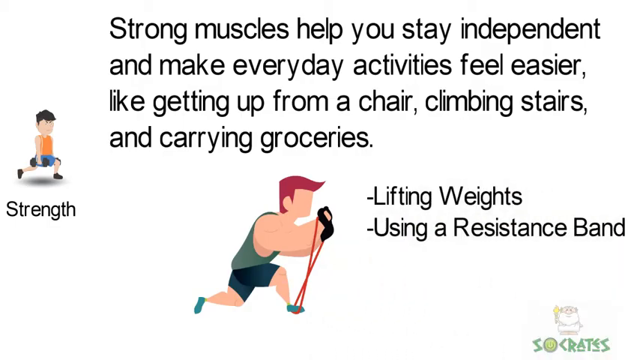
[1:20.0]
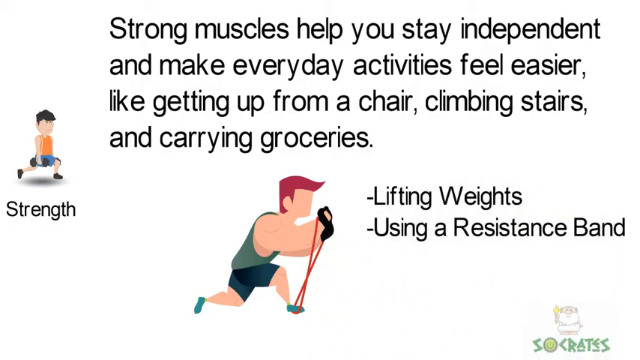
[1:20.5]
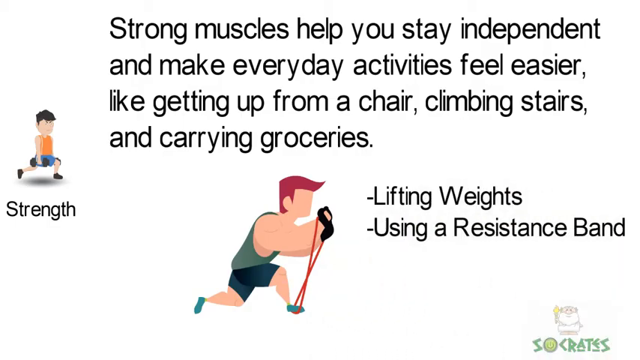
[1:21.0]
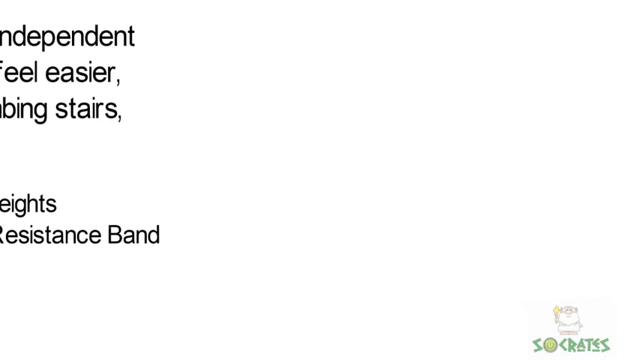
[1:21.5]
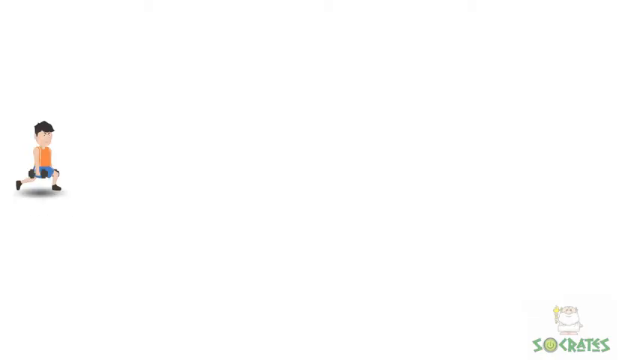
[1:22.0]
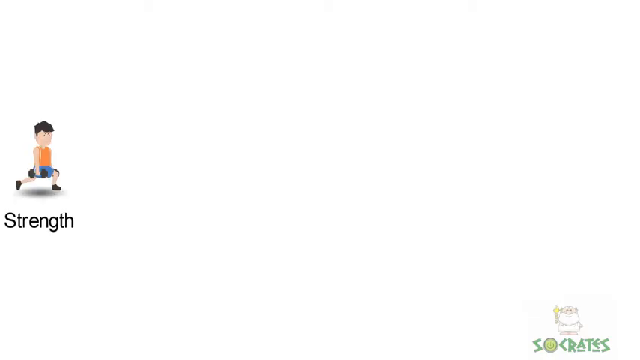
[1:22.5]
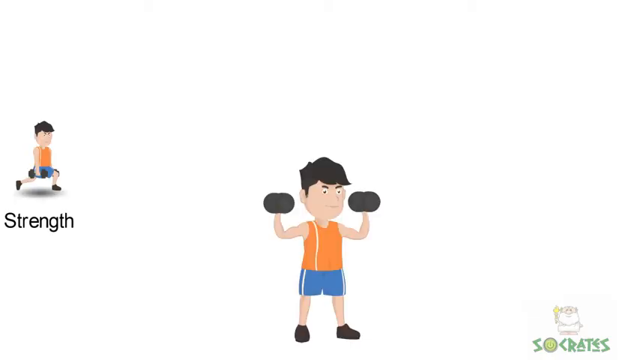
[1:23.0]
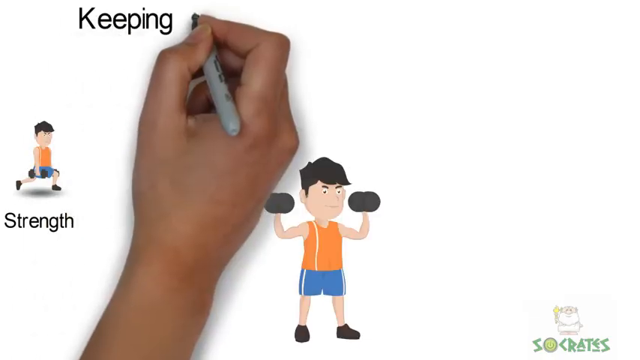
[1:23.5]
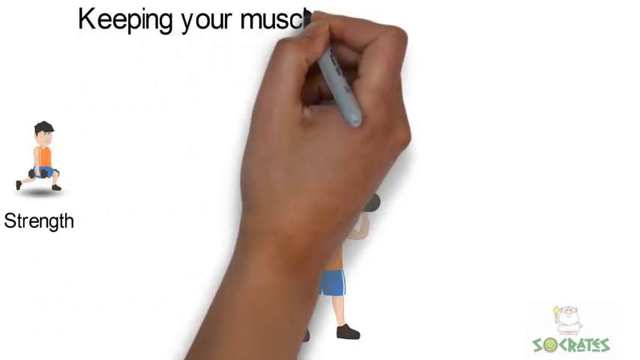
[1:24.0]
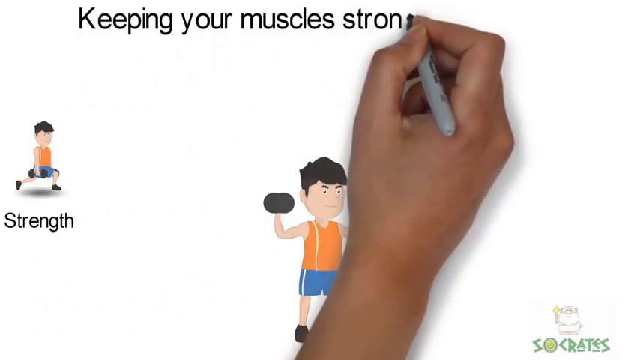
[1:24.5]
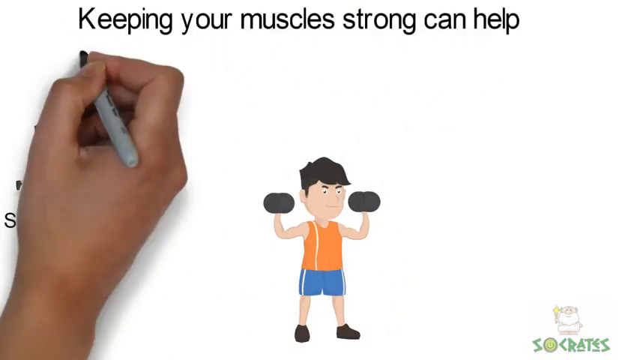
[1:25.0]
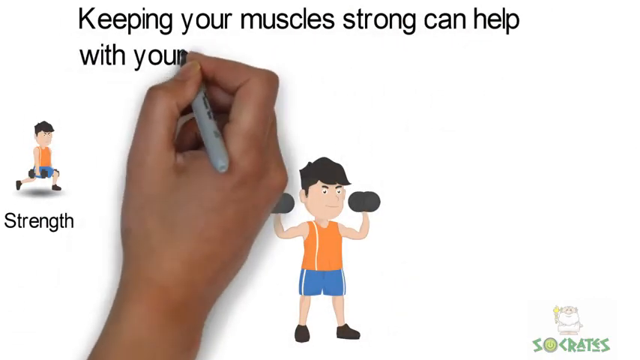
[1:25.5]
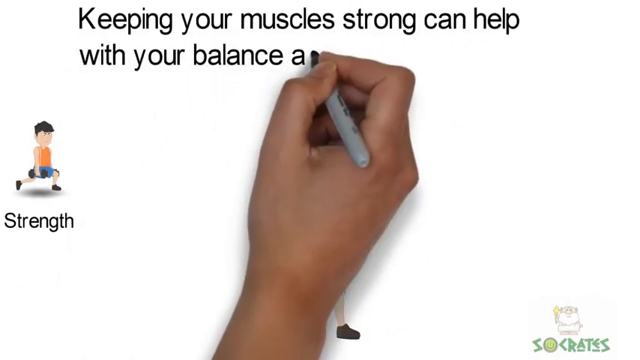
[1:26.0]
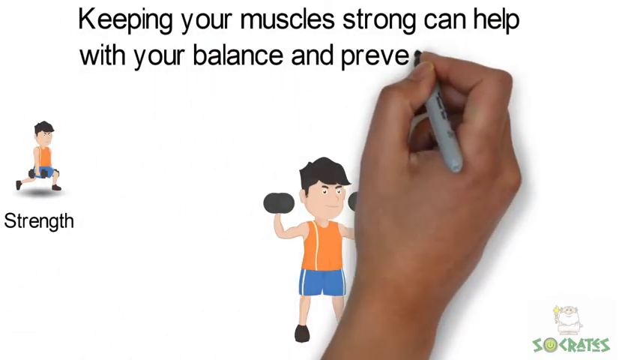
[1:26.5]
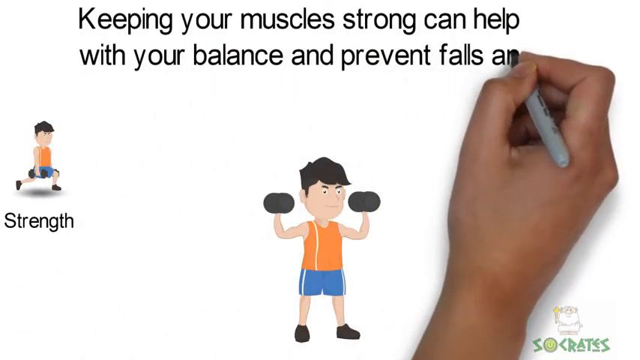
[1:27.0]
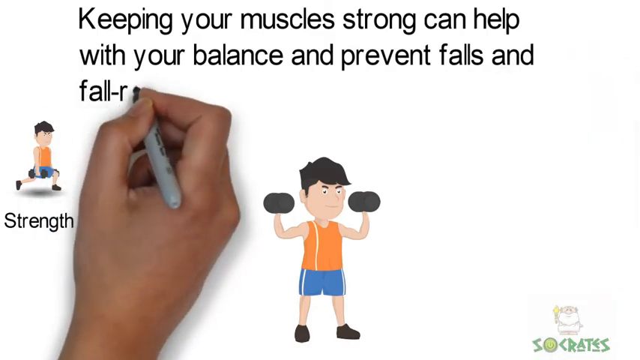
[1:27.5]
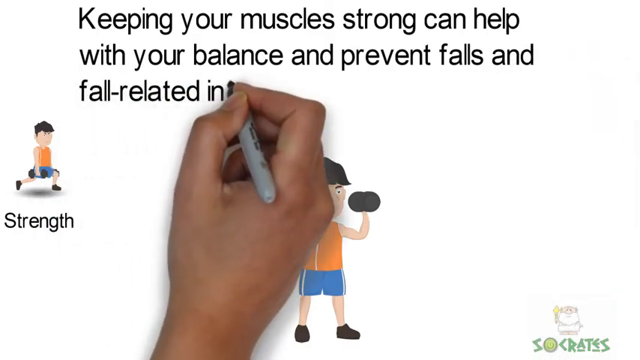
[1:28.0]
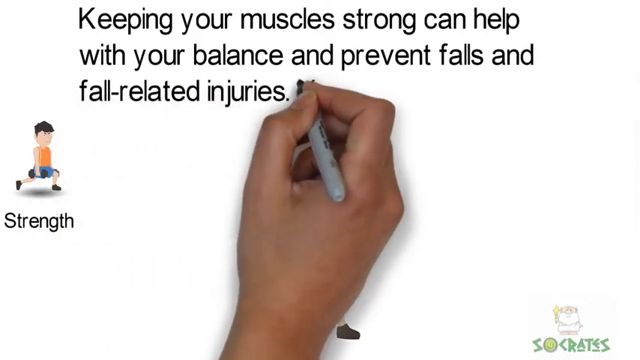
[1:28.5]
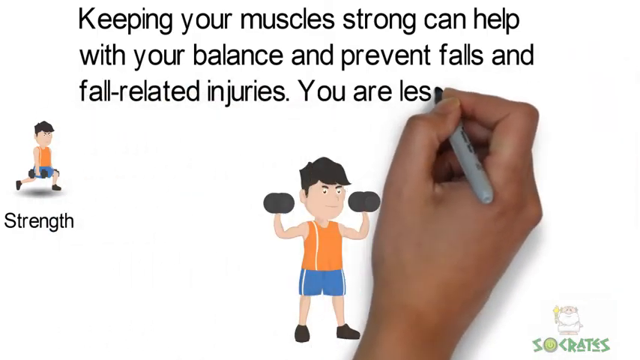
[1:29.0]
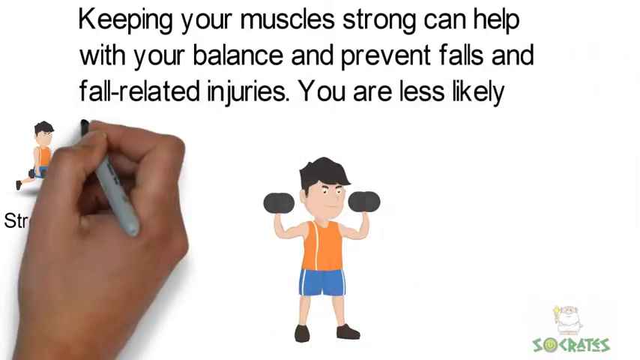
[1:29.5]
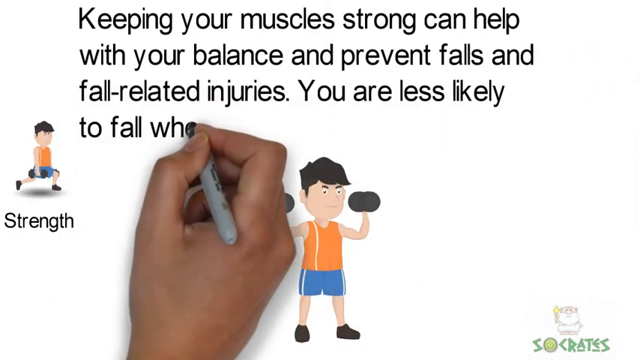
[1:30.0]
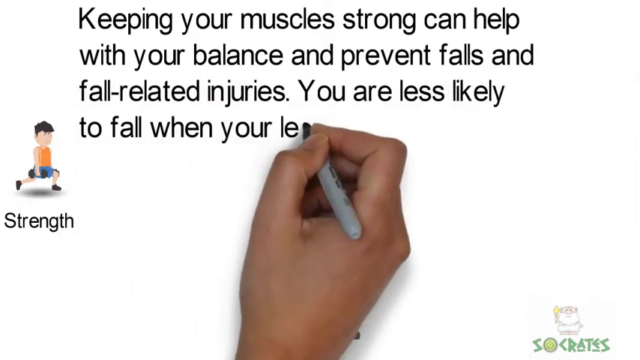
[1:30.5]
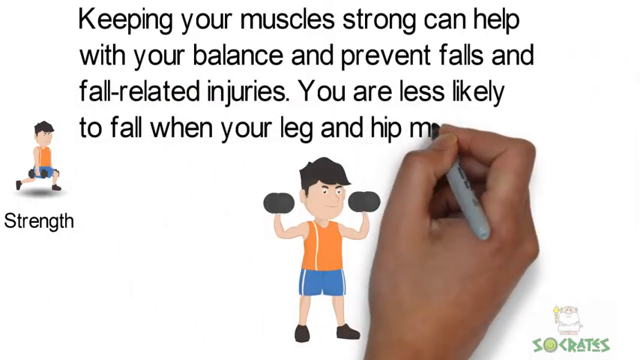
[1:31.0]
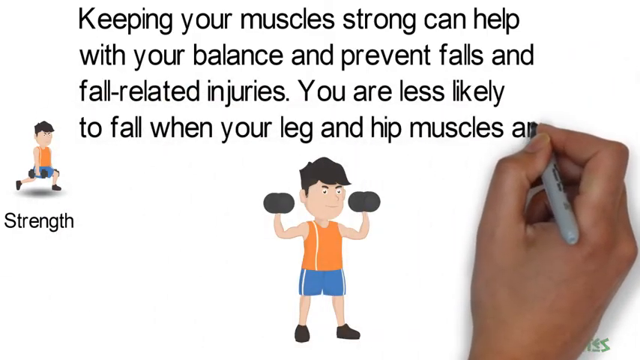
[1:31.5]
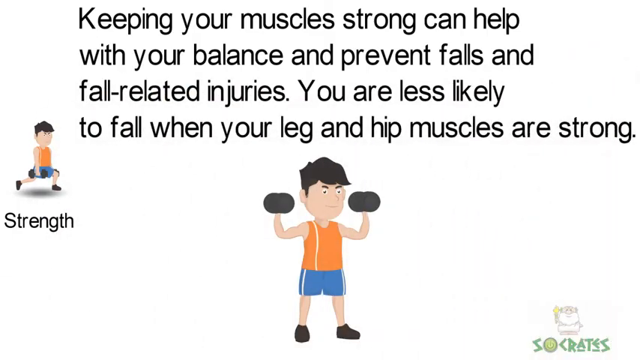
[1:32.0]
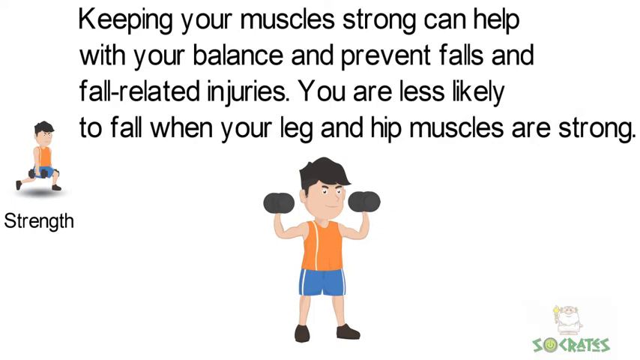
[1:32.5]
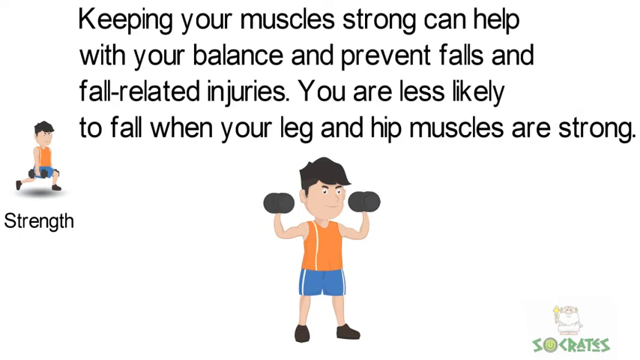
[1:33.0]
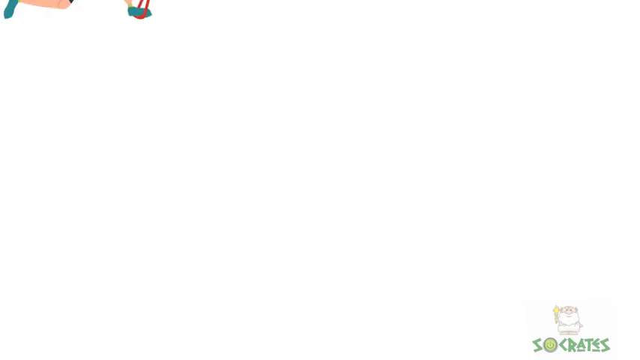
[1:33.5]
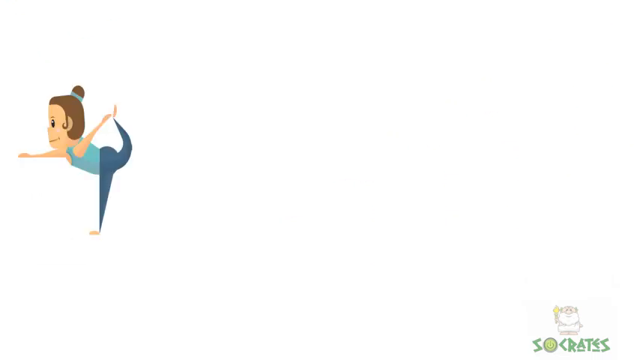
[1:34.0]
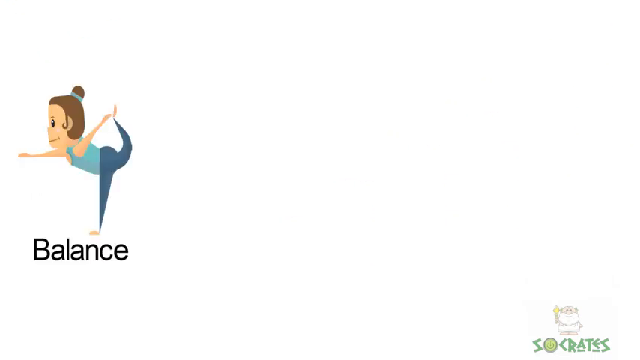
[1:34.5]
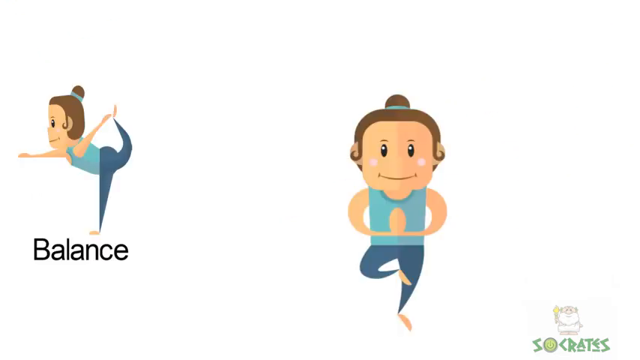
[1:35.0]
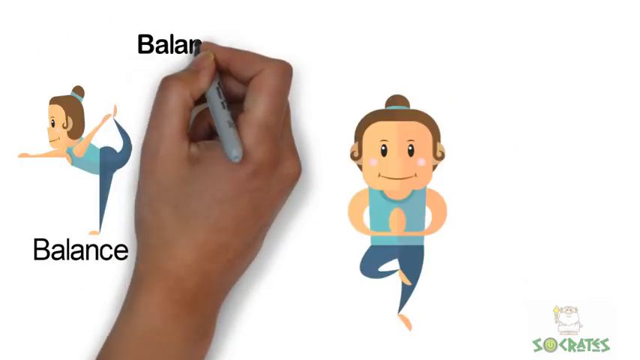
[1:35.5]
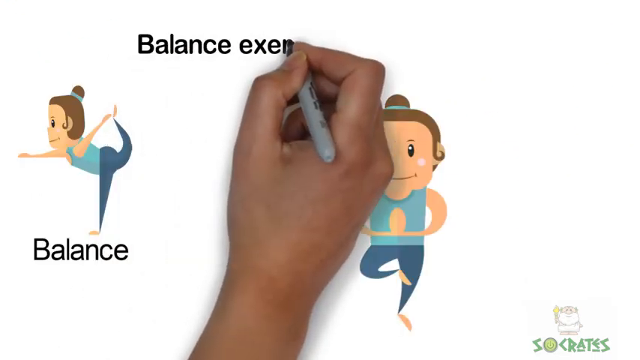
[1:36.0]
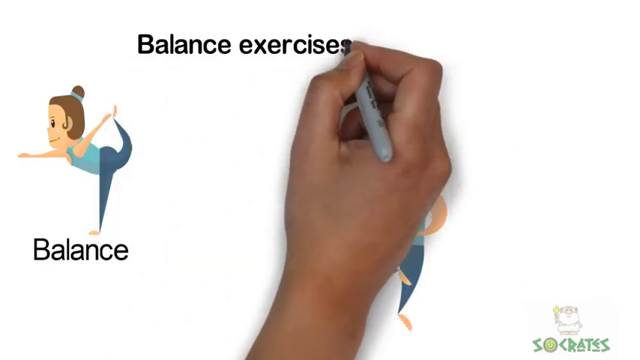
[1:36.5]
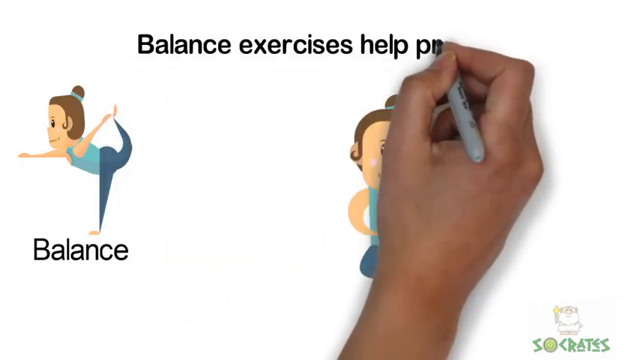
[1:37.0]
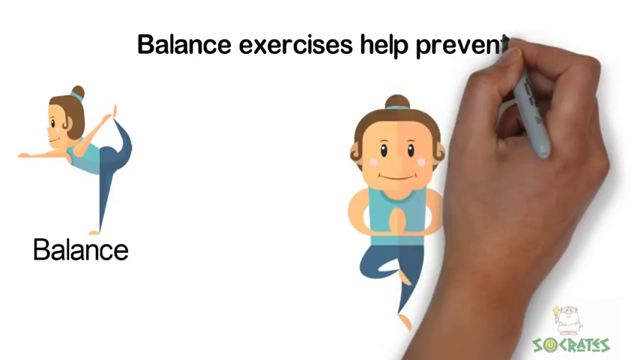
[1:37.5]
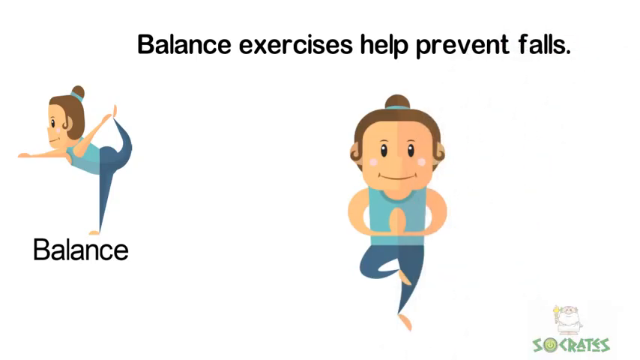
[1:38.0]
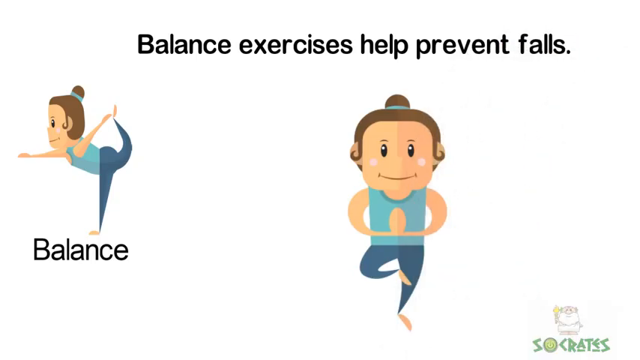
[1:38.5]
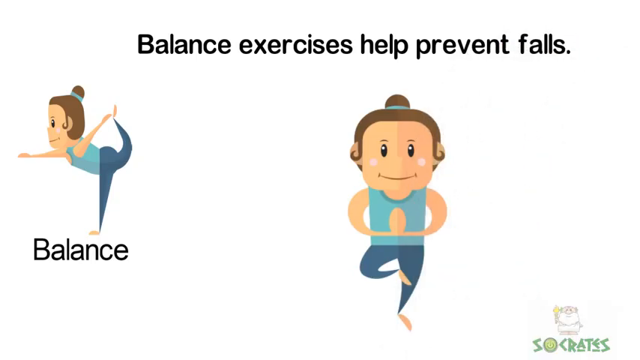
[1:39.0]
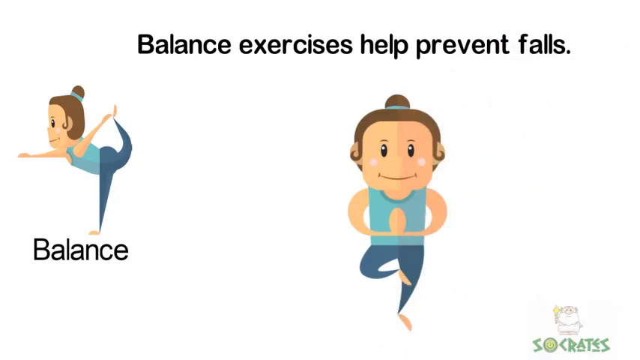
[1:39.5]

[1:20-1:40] On a white screen, a person's hand, visible from the wrist up, holds a gray marker with a black tip and writes in black starting at the top: "Keeping your muscles strong can help with your balance and prevent falls and fall-related injuries. You are less likely to fall when your leg and hip muscles are strong." Underneath is a cartoon man with black hair, wearing blue shorts, an orange tank top and black shoes, holding two barbells up on both sides of him. Everything then disappears, and the hand writes at the top: "balance exercises help prevent falls." Underneath is a cartoon woman with brown hair in a ponytail, wearing a turquoise tank top and green stretch pants, with the word "balance" beneath her. She leans forward, standing on one leg, with her other leg behind her, grabbing it with her hand.